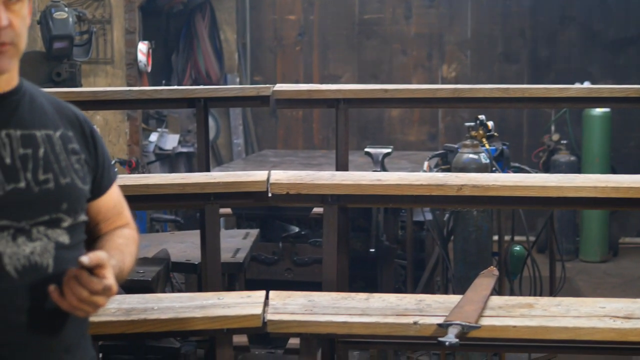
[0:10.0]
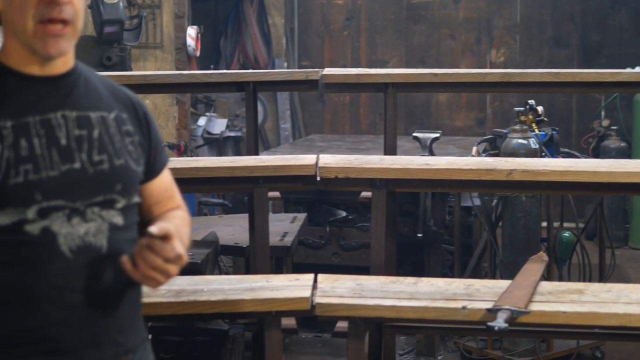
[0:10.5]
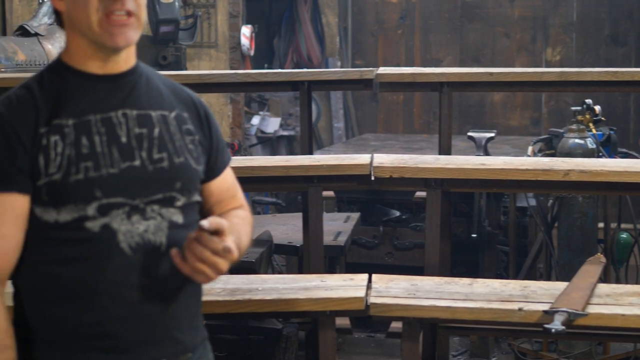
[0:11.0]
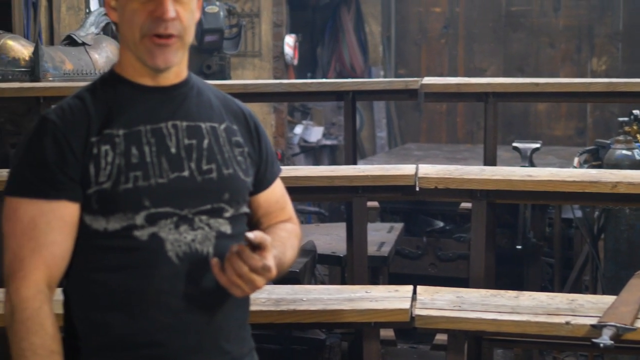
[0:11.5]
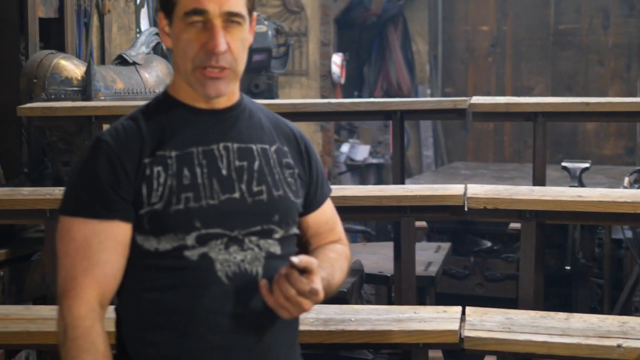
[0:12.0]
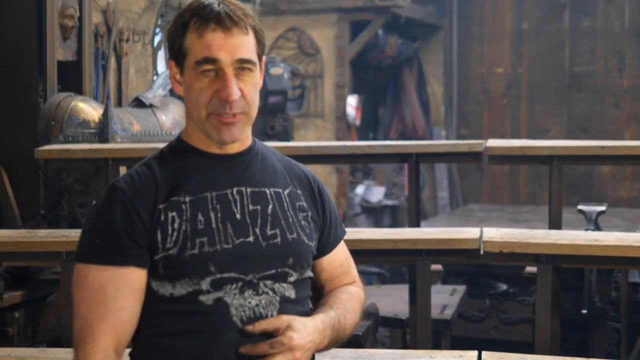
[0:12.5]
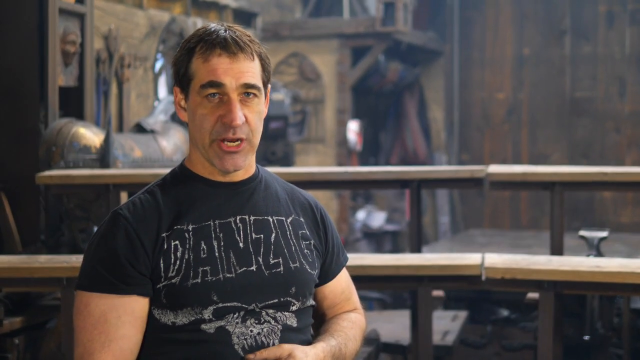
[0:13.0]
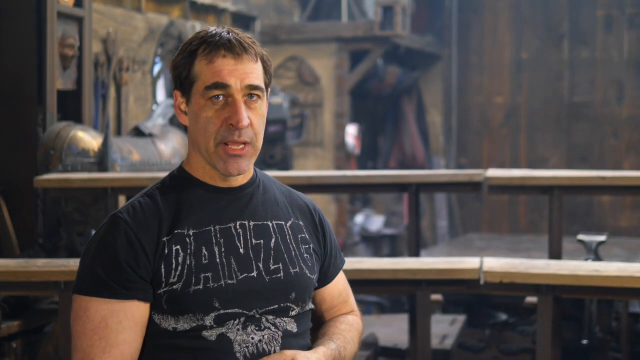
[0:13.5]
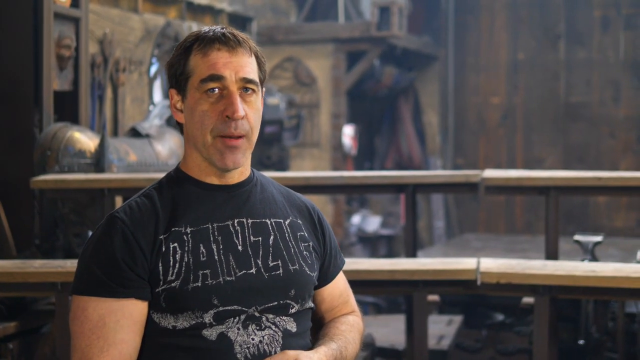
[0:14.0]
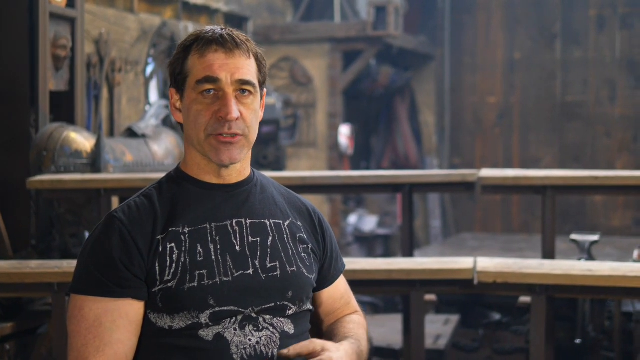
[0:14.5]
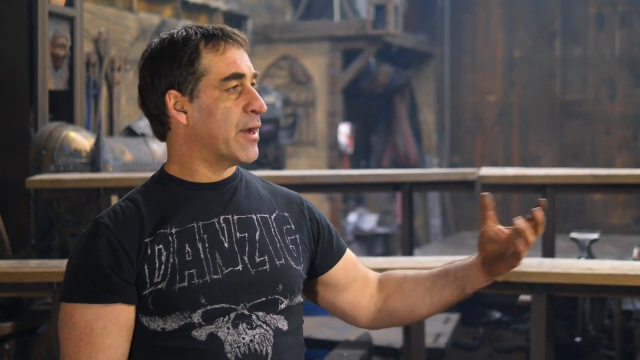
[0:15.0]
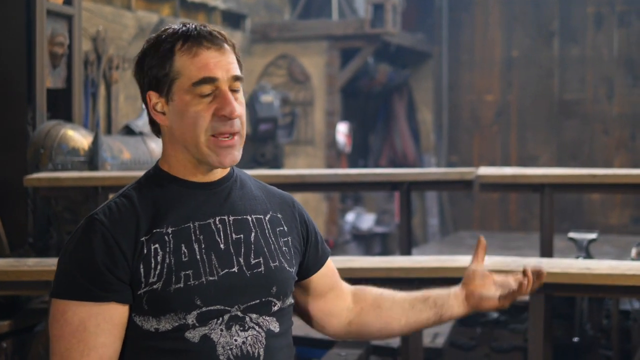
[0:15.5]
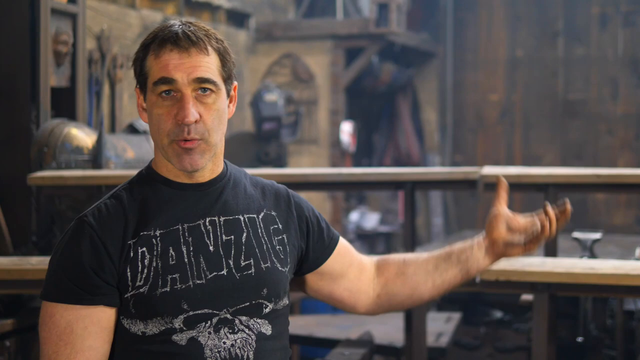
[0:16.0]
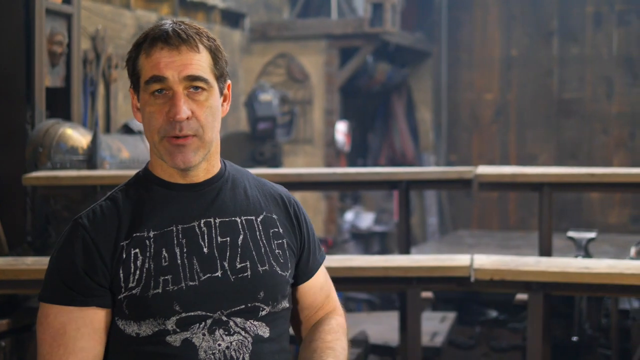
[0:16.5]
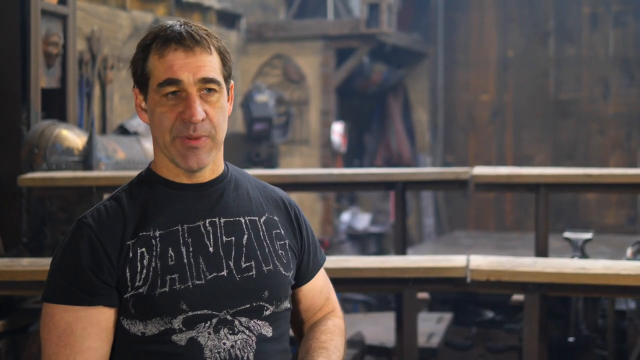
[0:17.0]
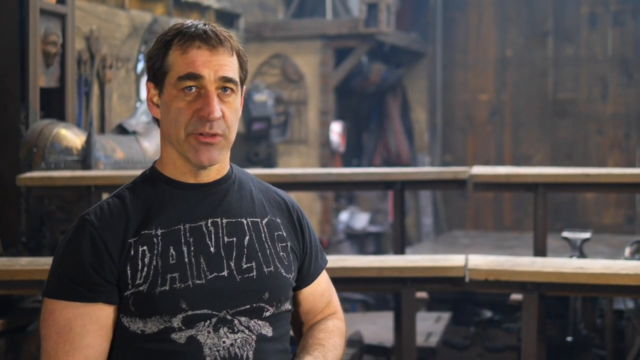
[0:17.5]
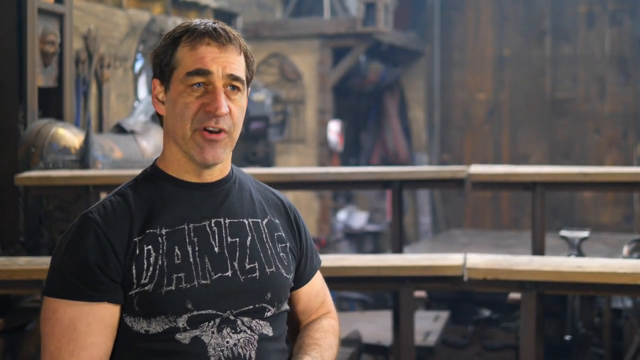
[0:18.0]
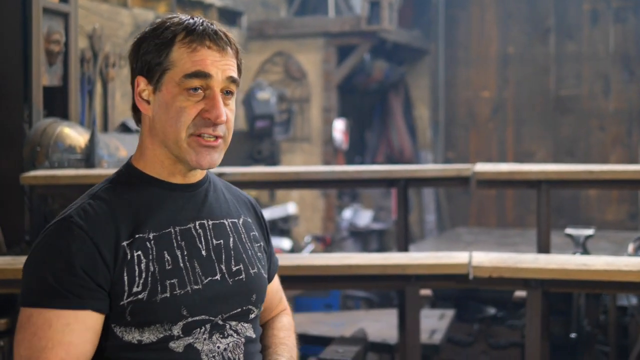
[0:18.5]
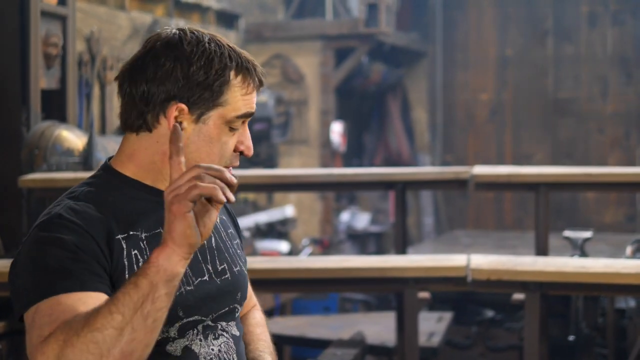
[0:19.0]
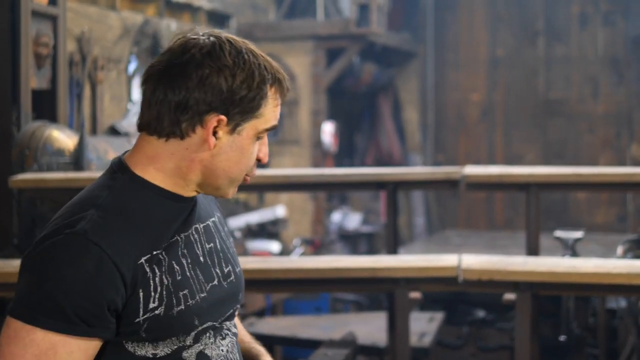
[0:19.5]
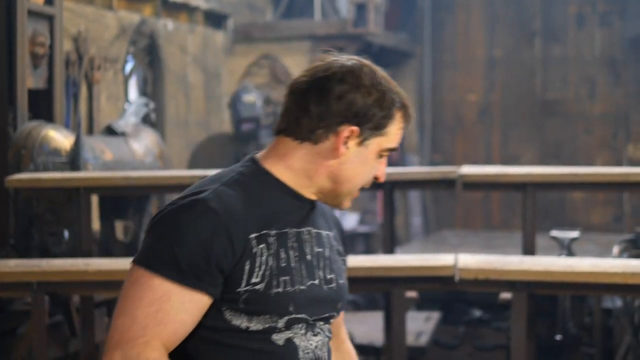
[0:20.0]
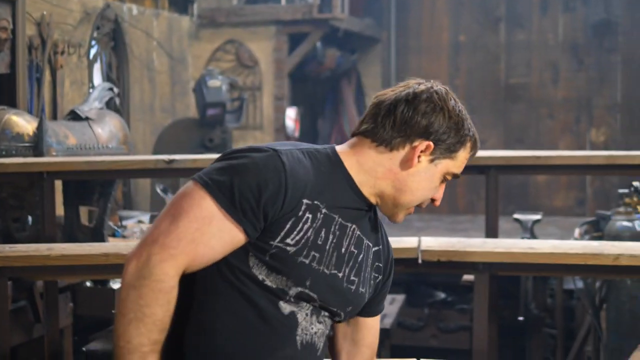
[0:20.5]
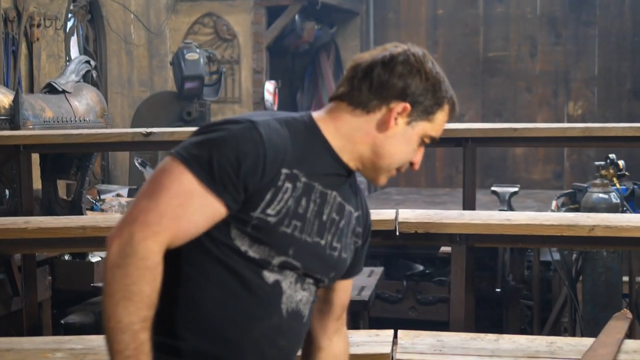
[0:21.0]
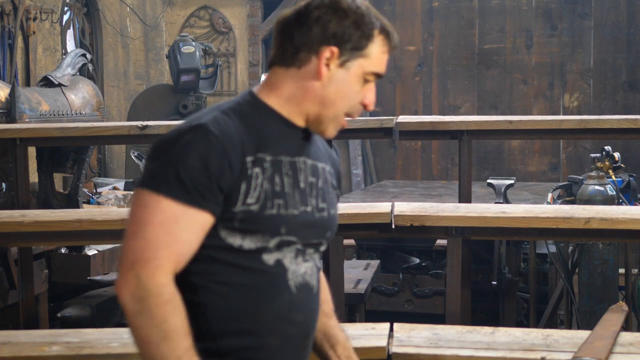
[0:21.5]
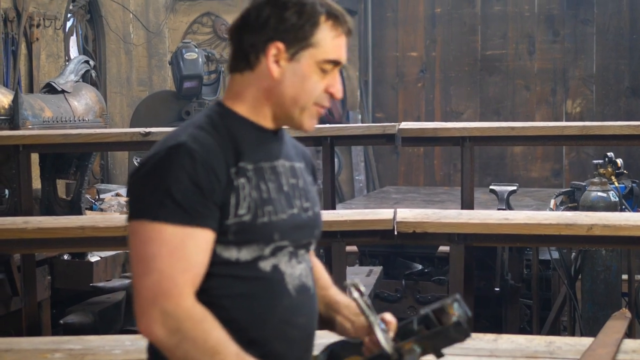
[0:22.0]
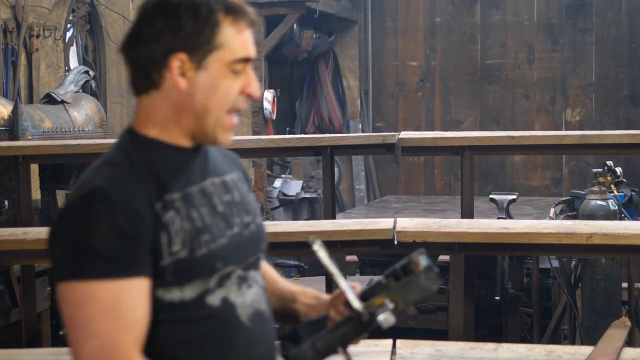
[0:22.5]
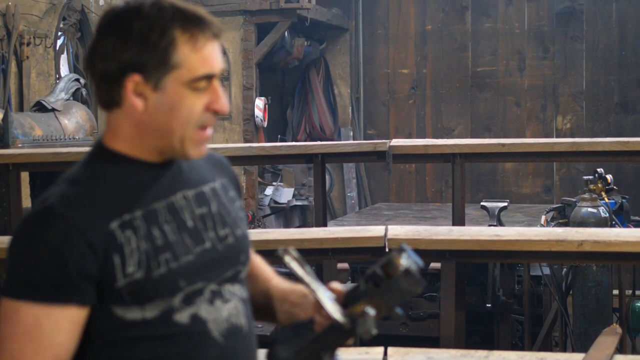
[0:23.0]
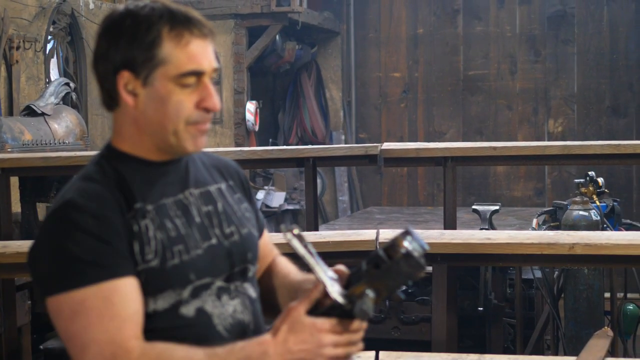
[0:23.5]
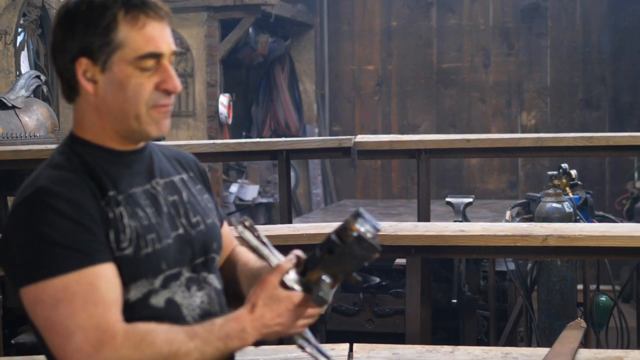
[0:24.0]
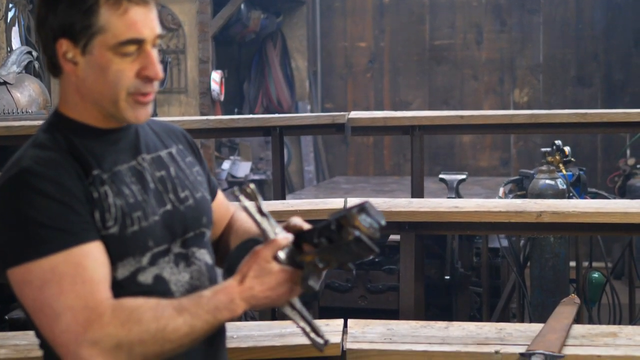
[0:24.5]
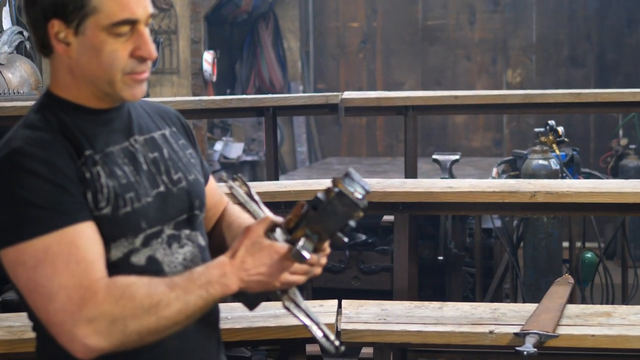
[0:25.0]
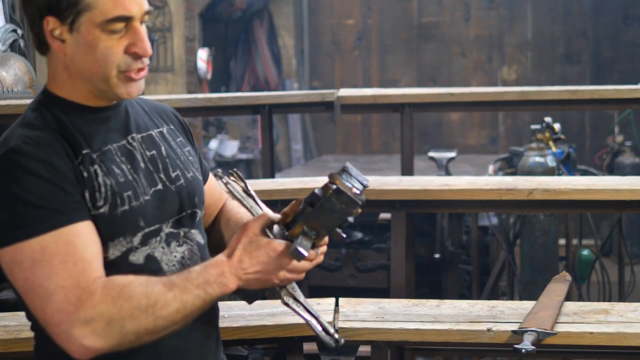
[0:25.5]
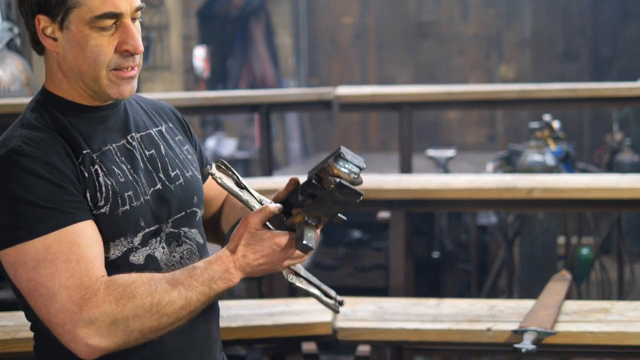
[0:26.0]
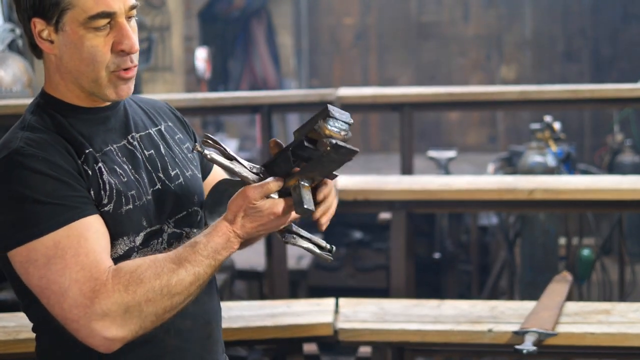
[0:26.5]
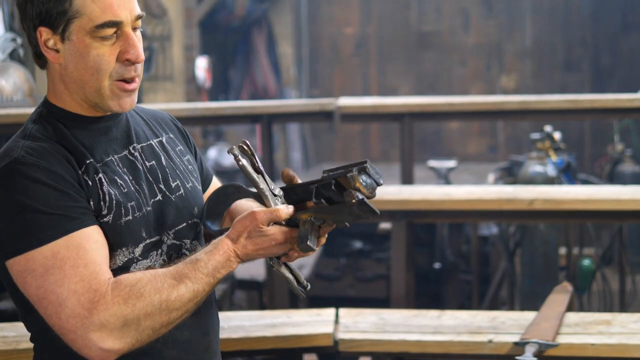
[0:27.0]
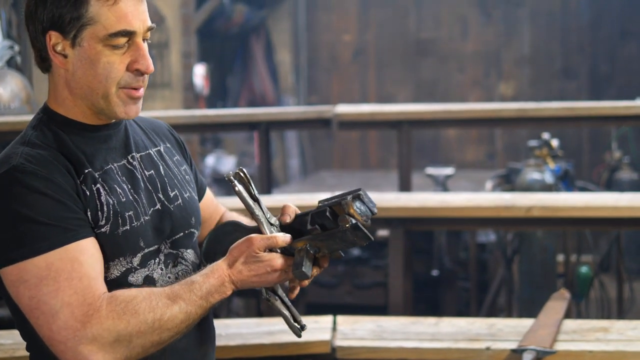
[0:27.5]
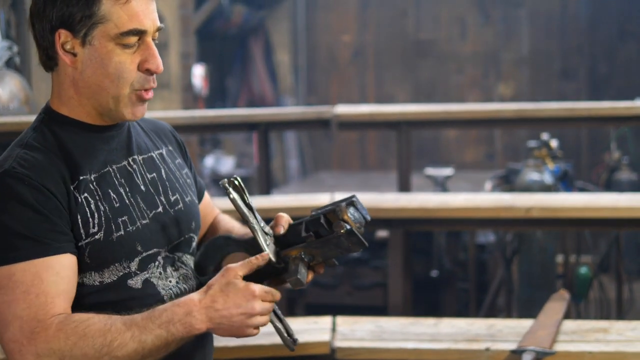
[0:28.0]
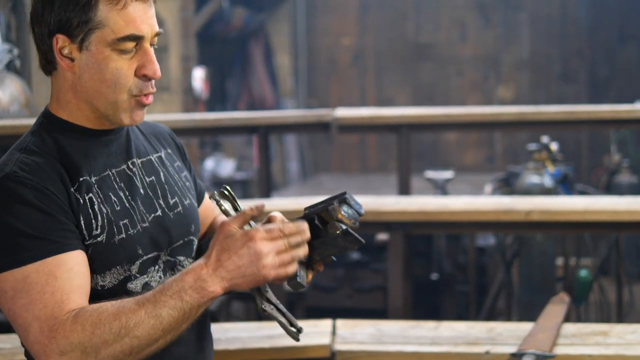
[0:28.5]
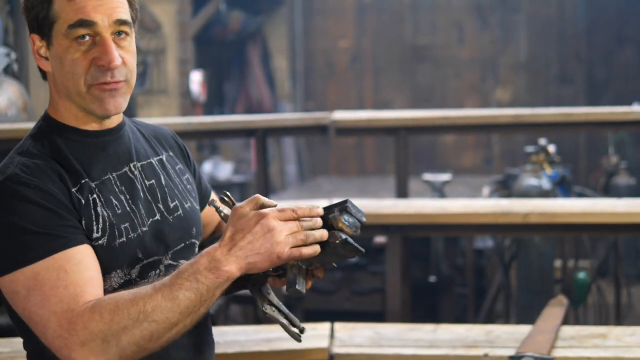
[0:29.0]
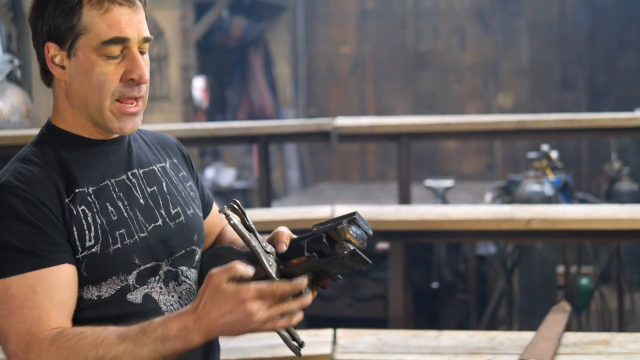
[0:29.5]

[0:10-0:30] Tanks are in the back on the right, possibly welding tanks, and bleacher-like structures are behind the man. He picks up a metal contraption with two vice grips, one on each side, holding two pieces of metal together. The metal is kind of straight with a loop on it toward him. Lots of things are lying around under the bleachers.